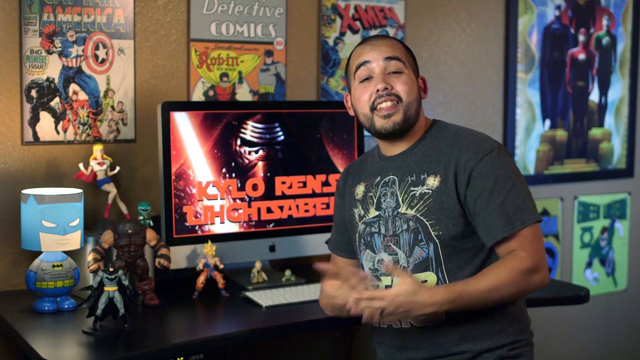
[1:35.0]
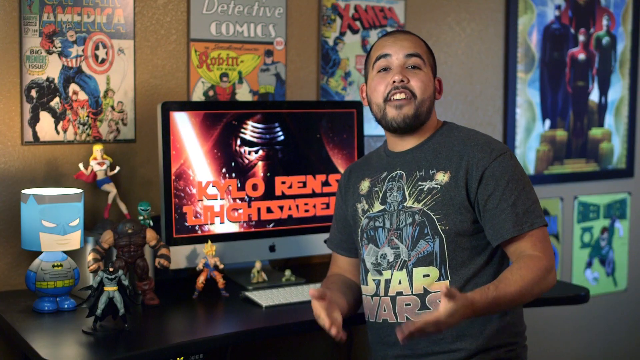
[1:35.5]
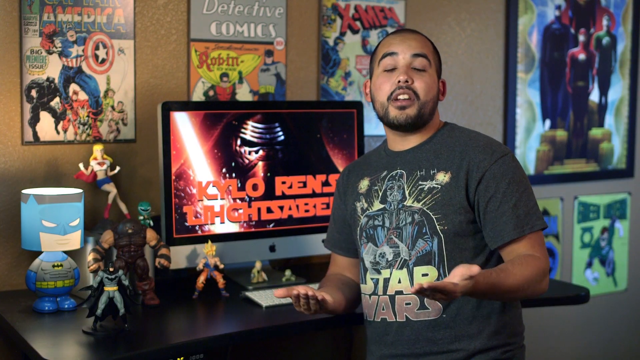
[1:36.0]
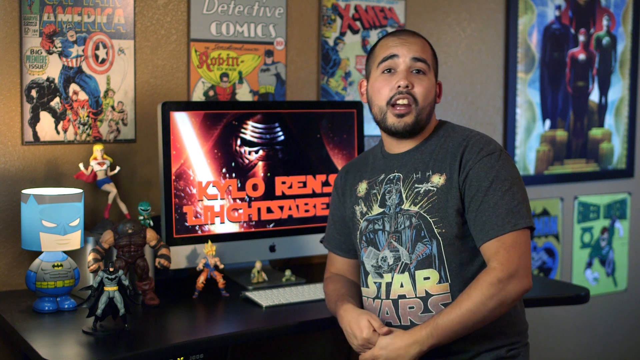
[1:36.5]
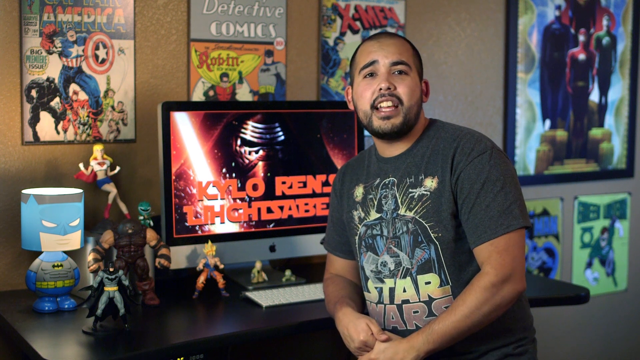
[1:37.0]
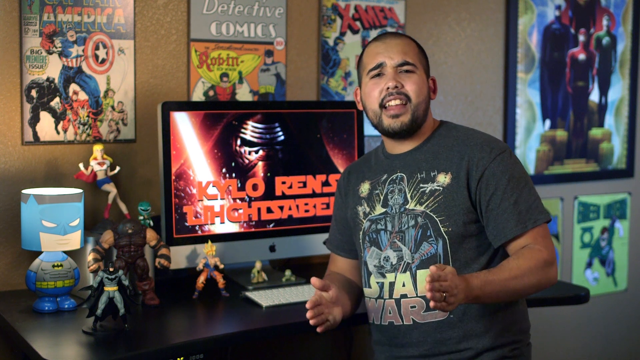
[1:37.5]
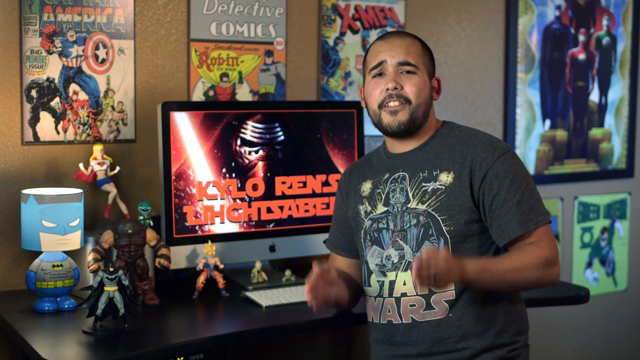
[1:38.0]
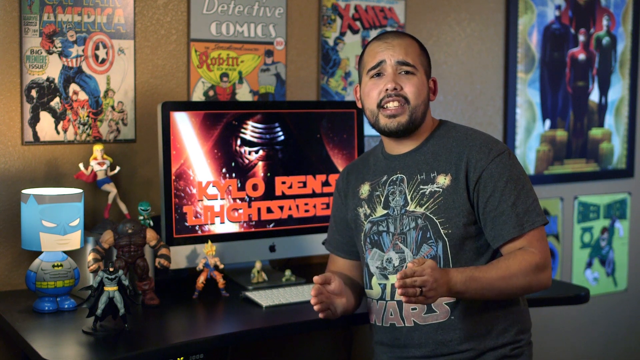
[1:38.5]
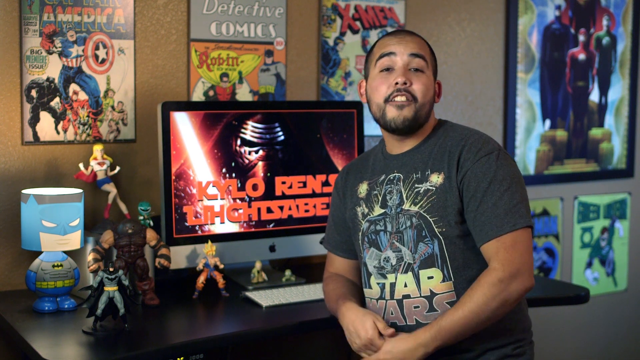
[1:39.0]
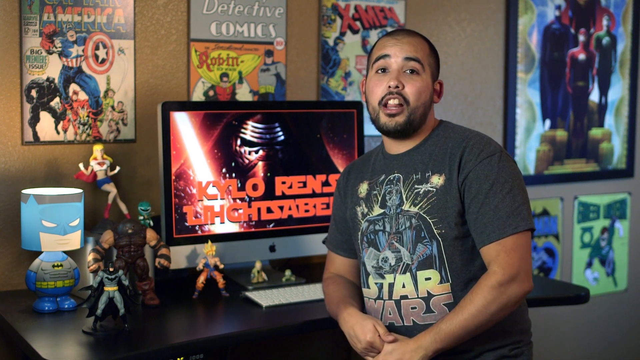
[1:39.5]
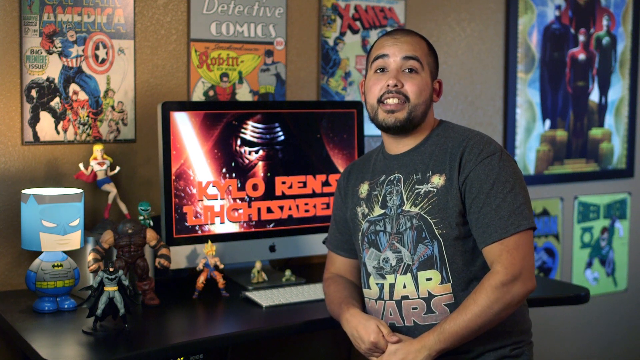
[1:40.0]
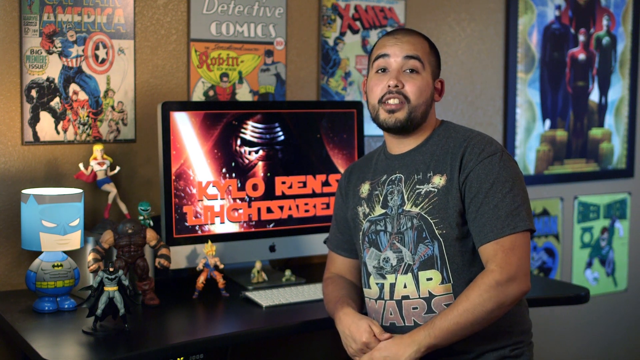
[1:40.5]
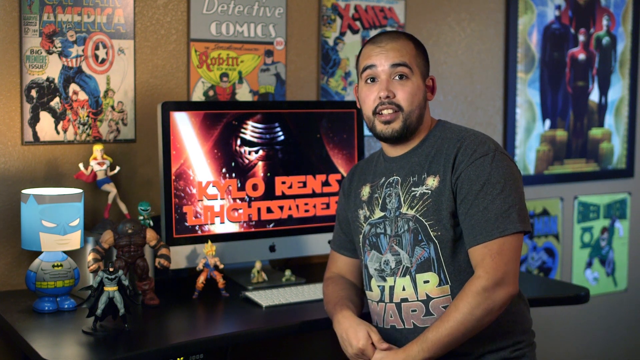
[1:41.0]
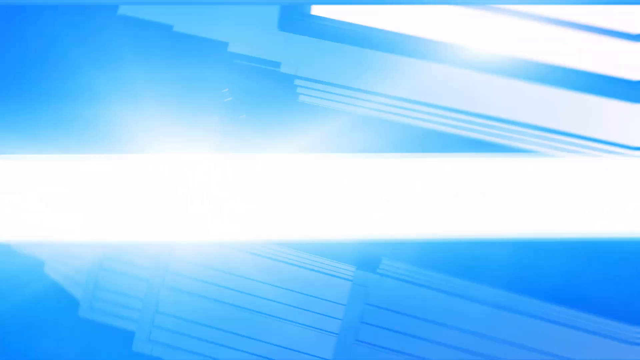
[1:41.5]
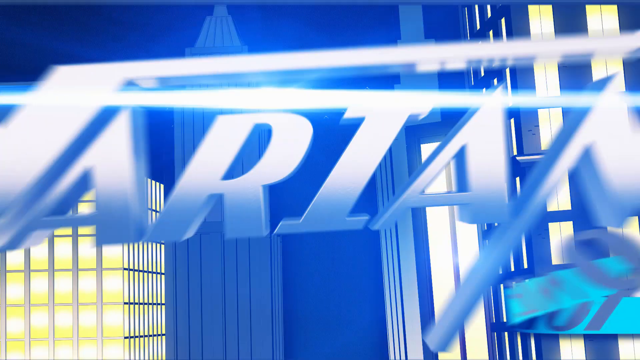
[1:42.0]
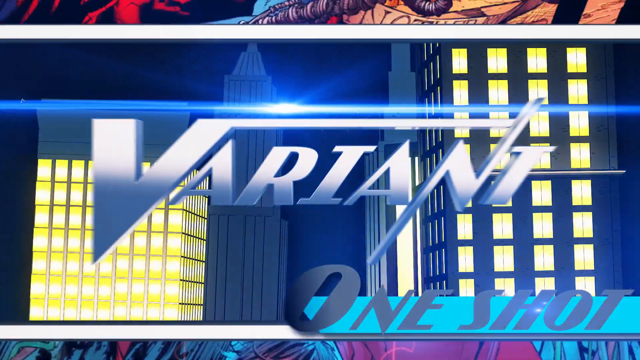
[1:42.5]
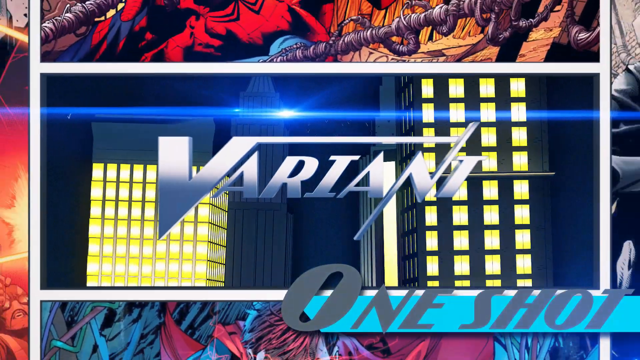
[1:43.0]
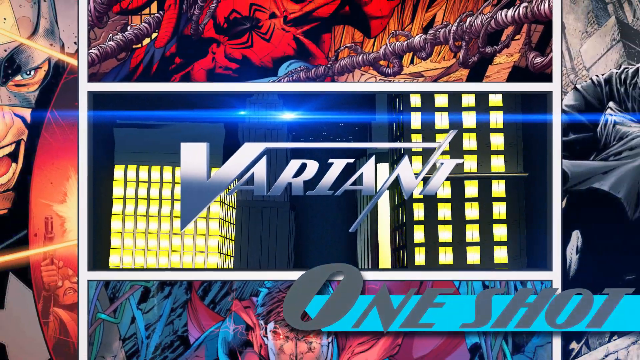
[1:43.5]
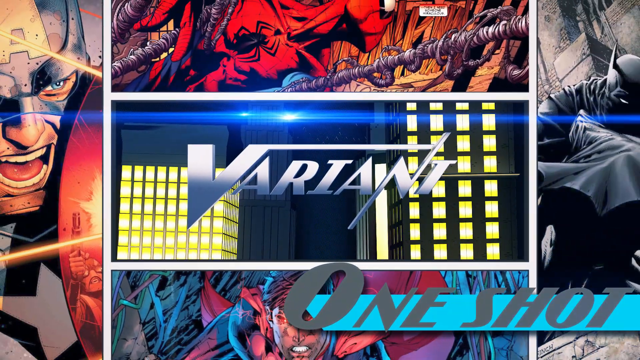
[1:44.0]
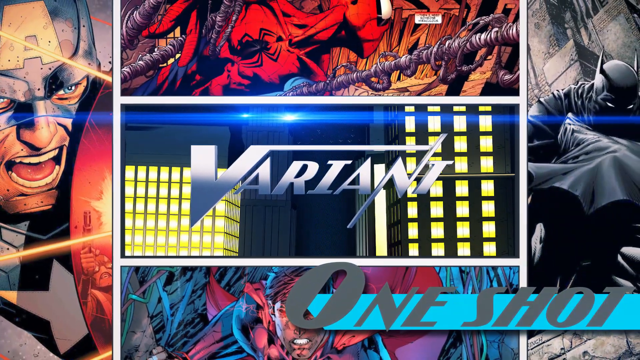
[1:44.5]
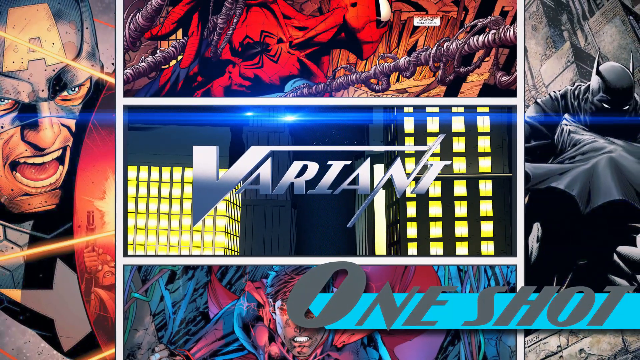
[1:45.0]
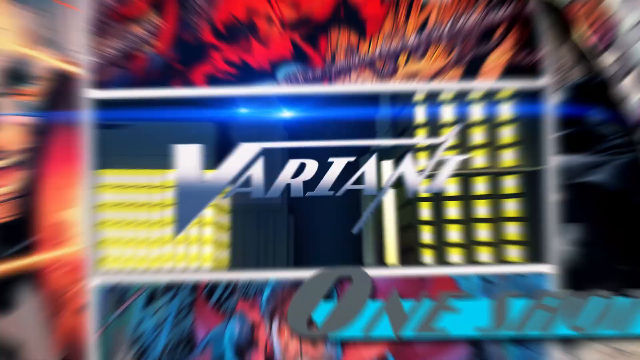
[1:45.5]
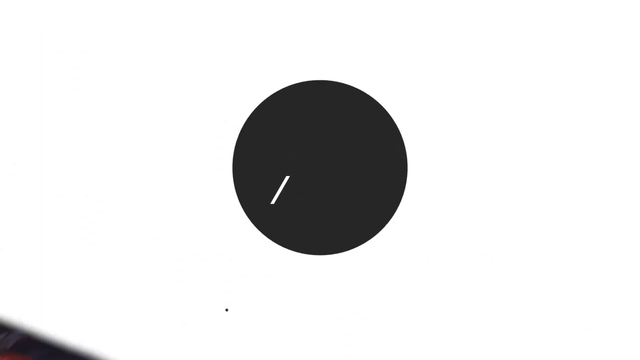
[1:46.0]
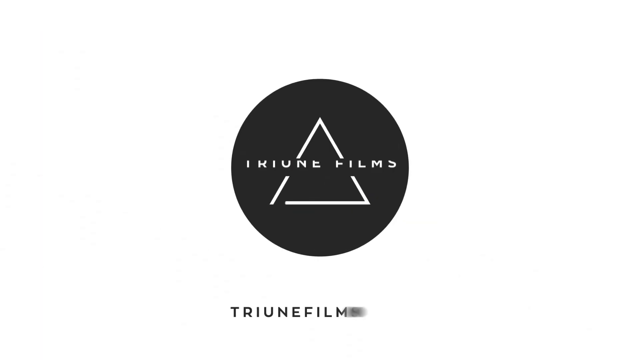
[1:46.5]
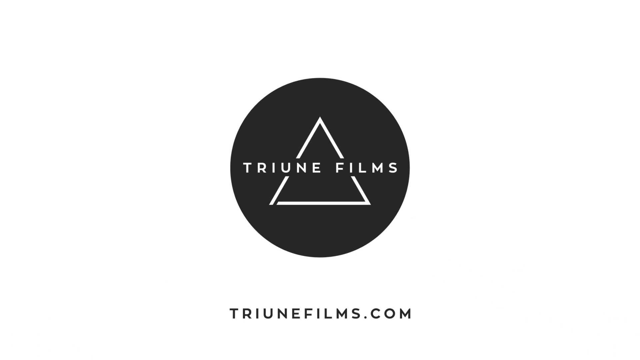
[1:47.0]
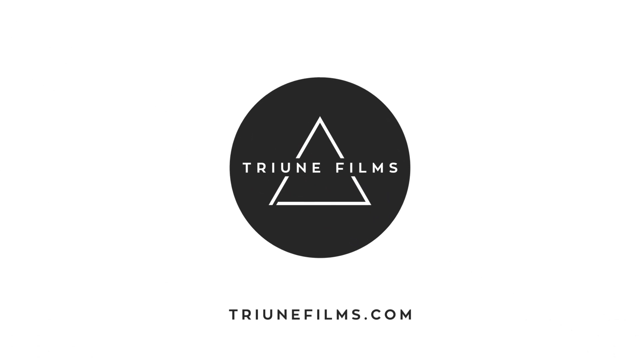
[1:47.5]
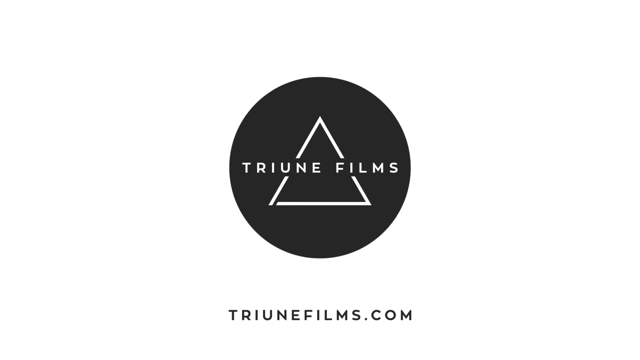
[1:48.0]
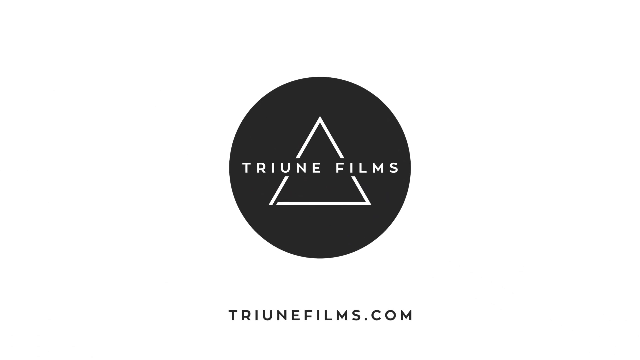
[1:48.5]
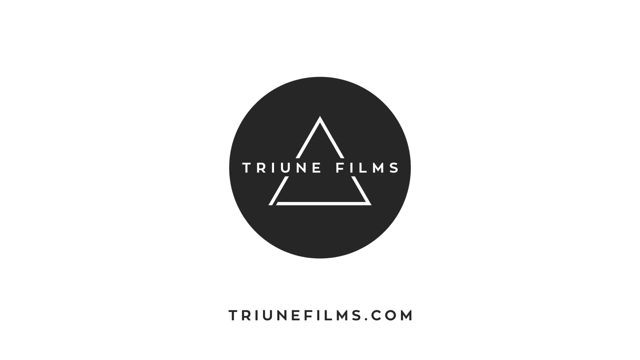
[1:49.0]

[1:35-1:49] The YouTube video was uploaded by the creator Variant Comics, whose banner appears in the upper left of the video: a circular blue background with a white-bordered blue shield with a V inside. The lead image shows Kylo Ren in his signature mask with a black cape pulled over his head and his red lightsaber deployed, overlaid with red Star Wars-style text reading "Kylo Ren's Lightsaber." A man who appears to be of Hispanic descent, with brown skin and short-cropped black hair, wears a Star Wars t-shirt with a cartoon-style Darth Vader. He is seated in what appears to be a home office or workspace, with an Apple computer behind him whose monitor shows the Kylo Ren image with "Kylo Ren's Lightsaber" in red font, and a tan wall behind him with enlarged, framed comic book images. A slide for Tribute Films has a white background with a circular gray insert containing a triangle, and at the bottom, in smaller black font, the URL "tributefilms.com". Another slide says "Variant One-Shot" and is surrounded by comic book images.